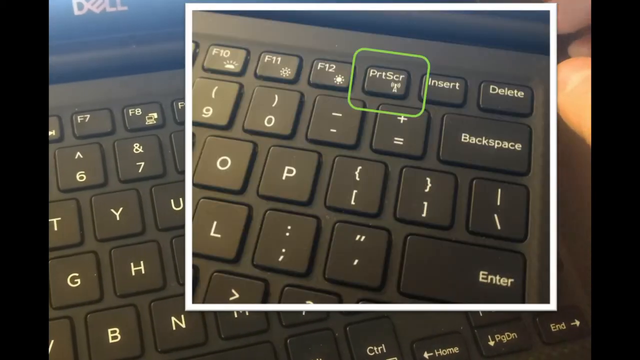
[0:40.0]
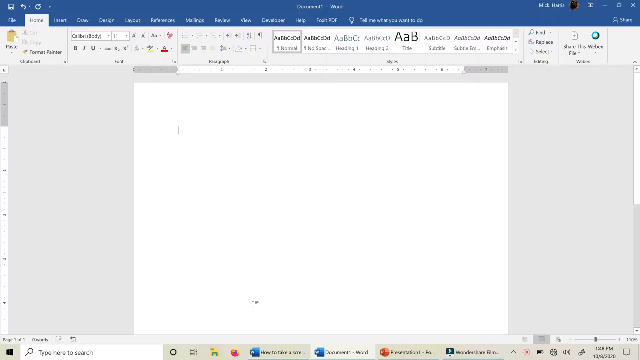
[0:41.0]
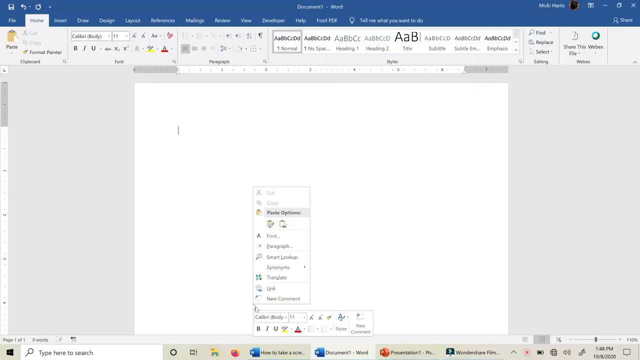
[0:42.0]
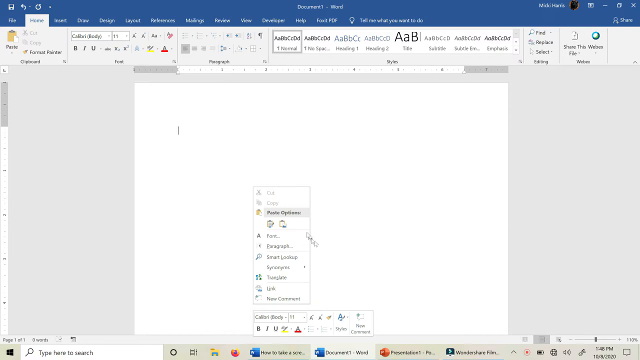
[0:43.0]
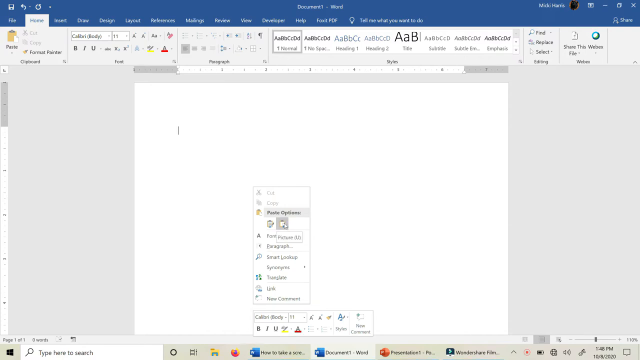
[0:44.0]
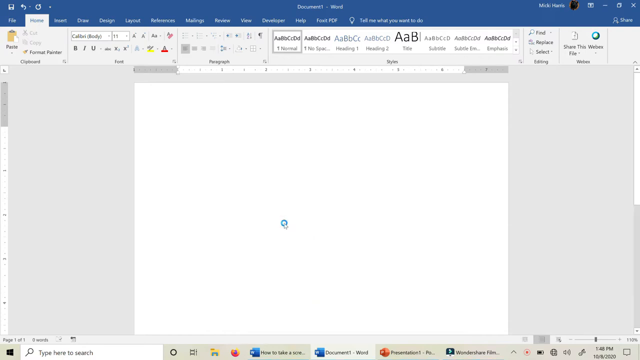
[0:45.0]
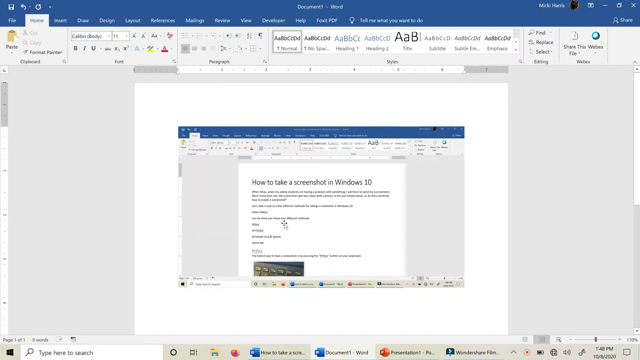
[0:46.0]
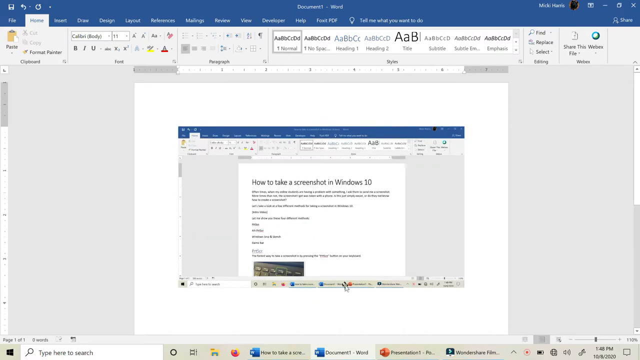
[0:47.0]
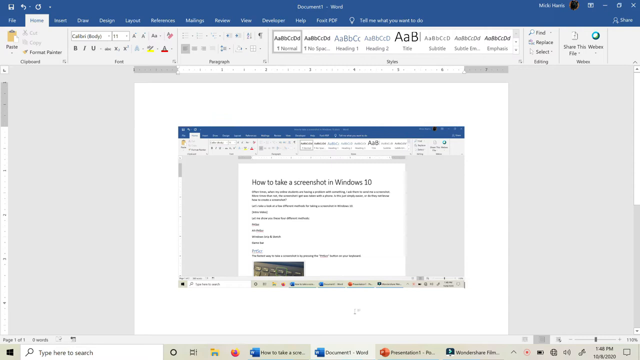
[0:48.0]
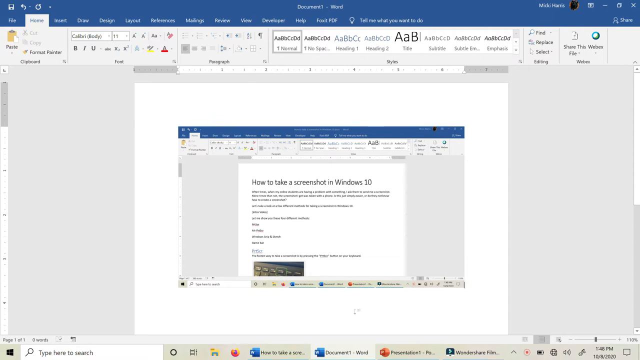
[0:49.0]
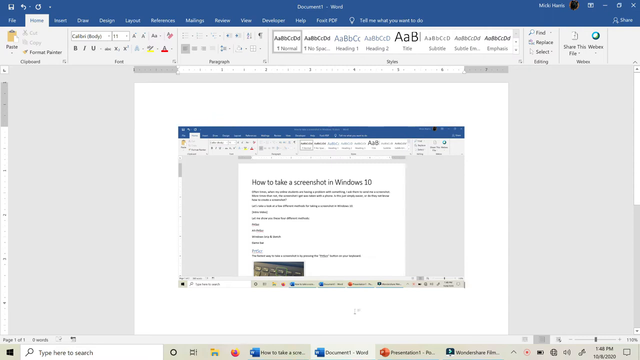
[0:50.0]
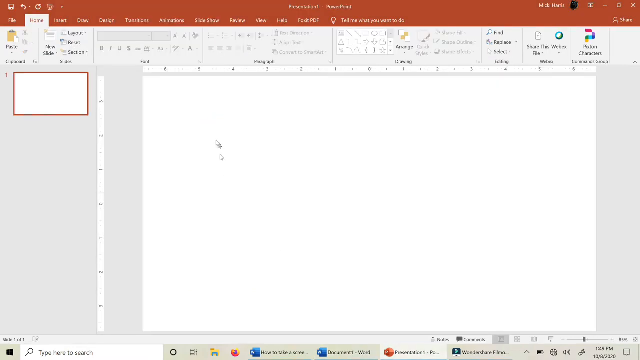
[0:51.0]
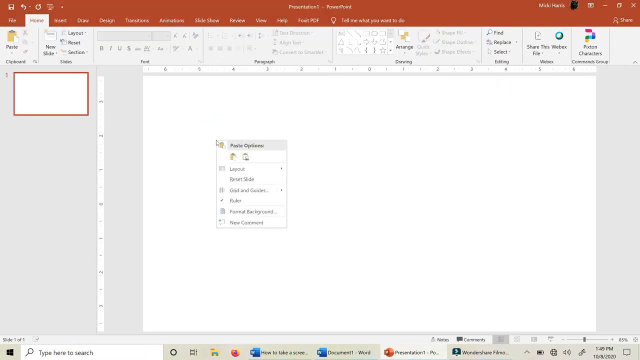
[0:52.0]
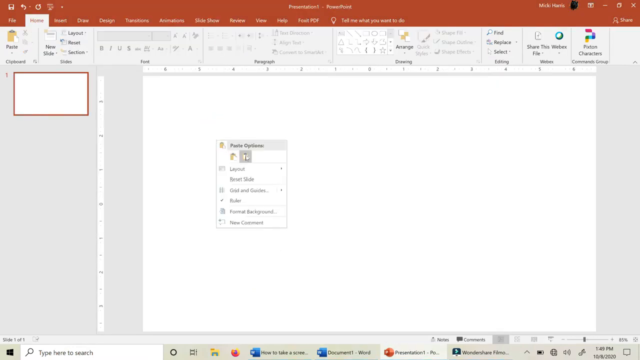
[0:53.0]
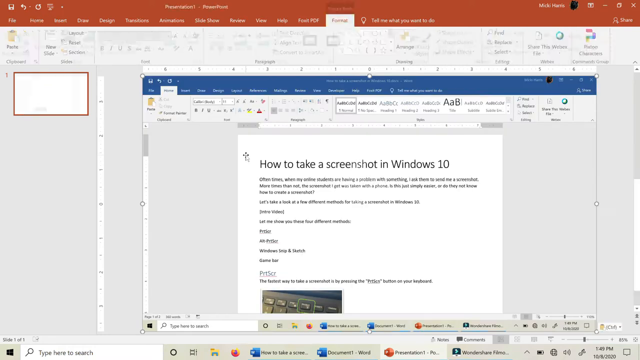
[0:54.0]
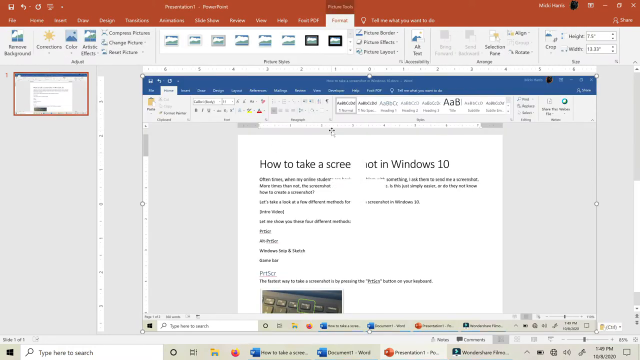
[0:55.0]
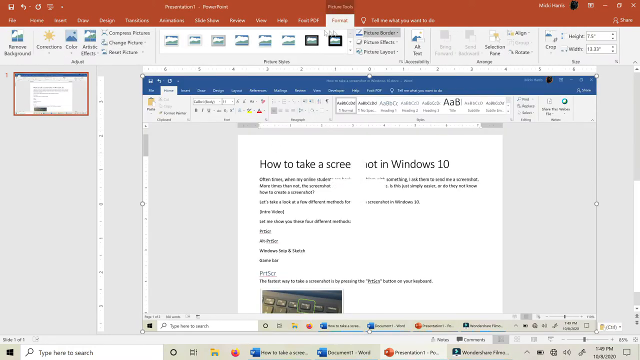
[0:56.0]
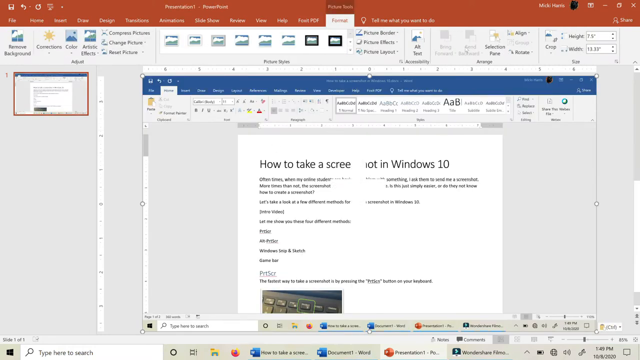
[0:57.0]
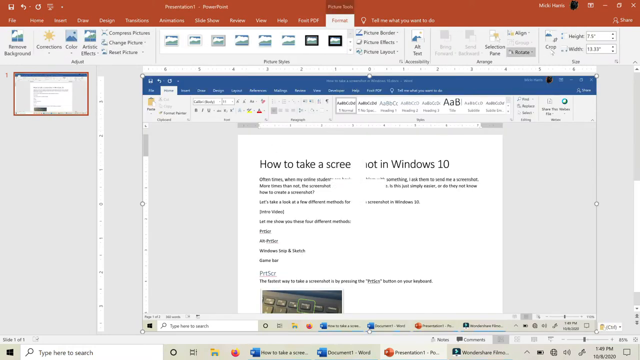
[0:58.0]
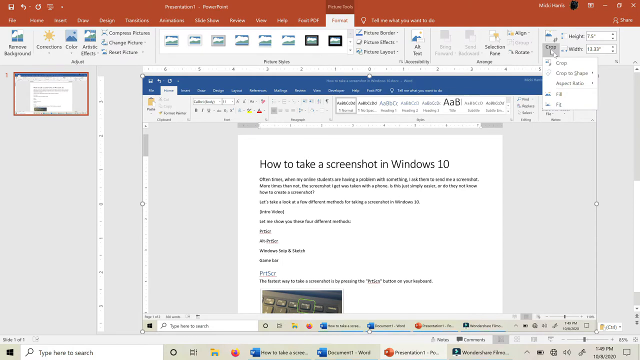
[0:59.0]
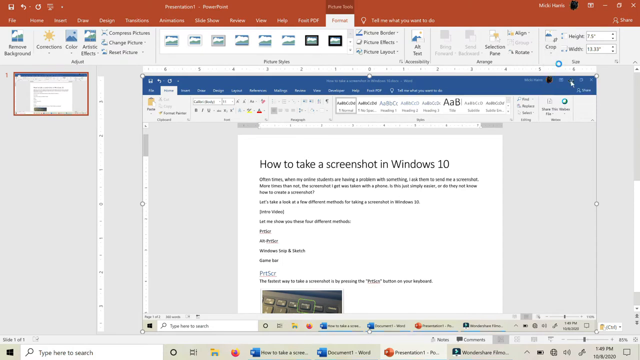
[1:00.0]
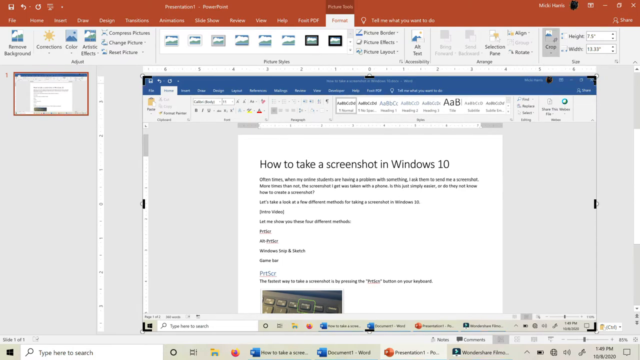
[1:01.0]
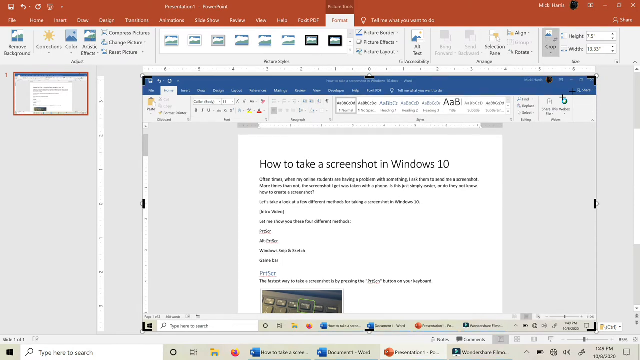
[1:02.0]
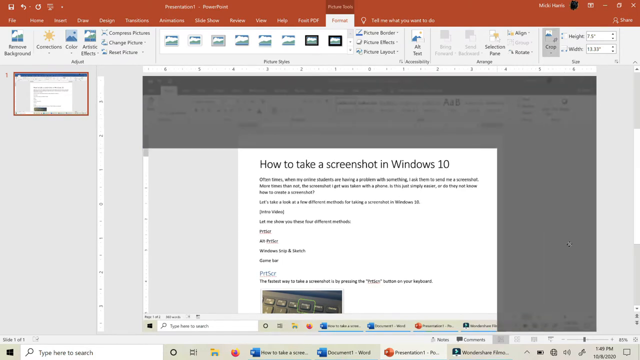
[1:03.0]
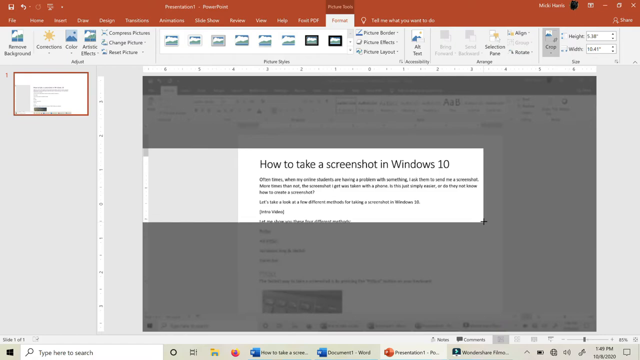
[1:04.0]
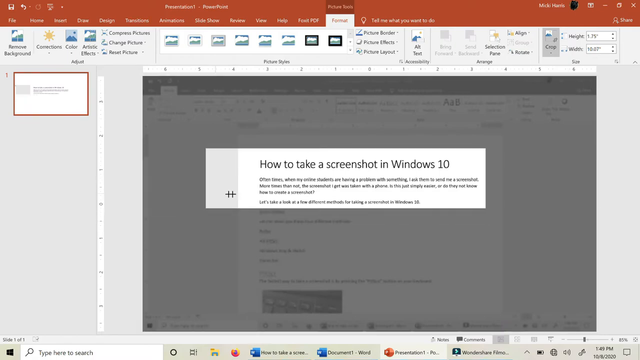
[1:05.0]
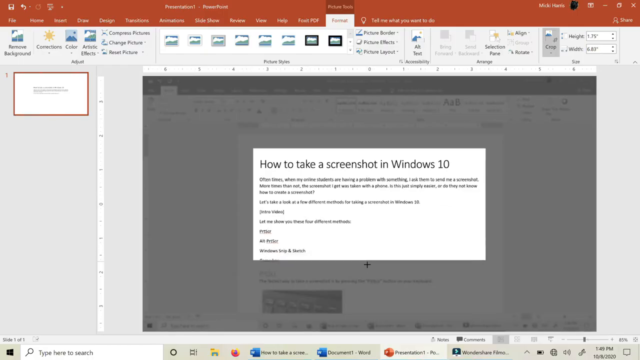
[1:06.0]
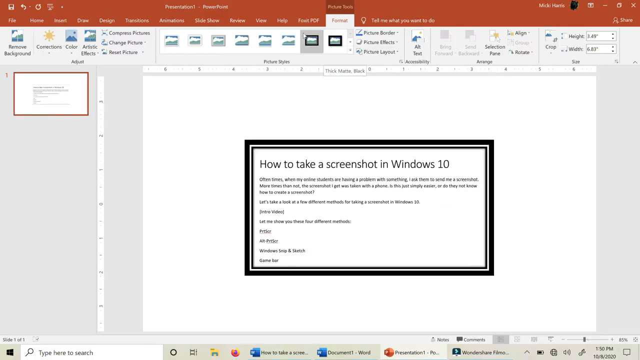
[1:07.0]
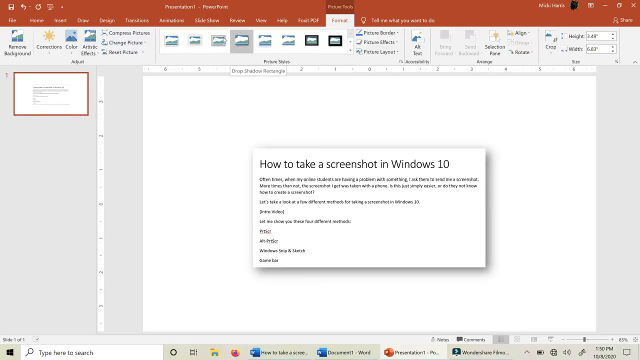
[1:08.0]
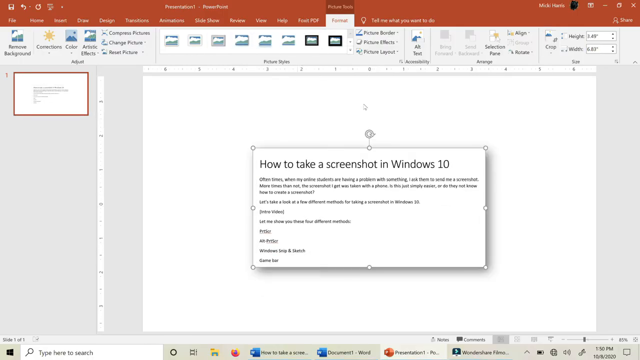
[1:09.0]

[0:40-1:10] The recording of the laptop keyboard continues, then closes in so only a small part of the keyboard is visible; in the top row of keys a green box surrounds the small PRTSCR key. Back in the Word document, a pop-up appears and they seem to select the paste option, pasting a screenshot of the other Word document about how to take a screenshot. They then move to a PowerPoint presentation, where a pop-up appears, they select paste, and they paste a screenshot of the how-to-take-a-screenshot document as well. They work with the features at the top, select crop, and appear to reduce the slide to include only a small portion of the screenshot.